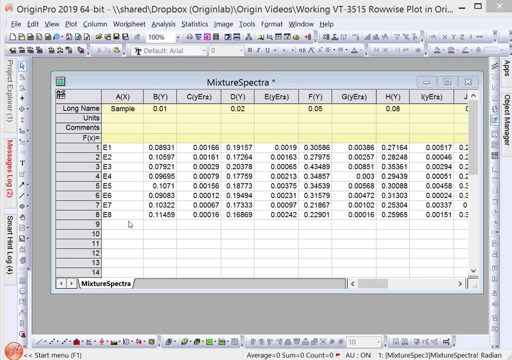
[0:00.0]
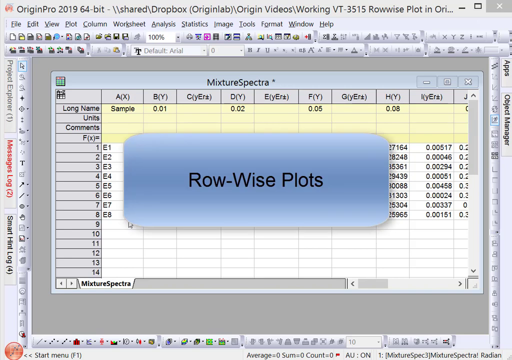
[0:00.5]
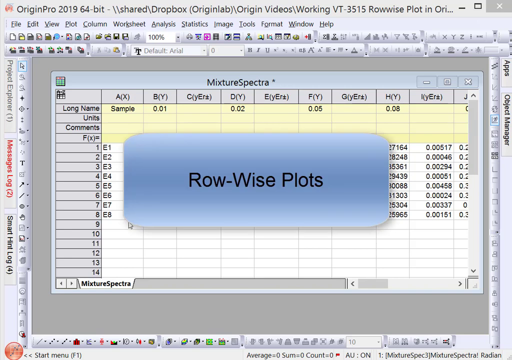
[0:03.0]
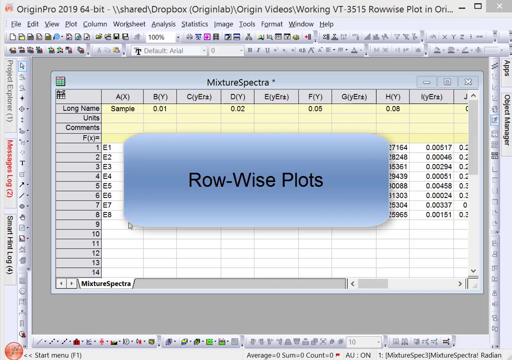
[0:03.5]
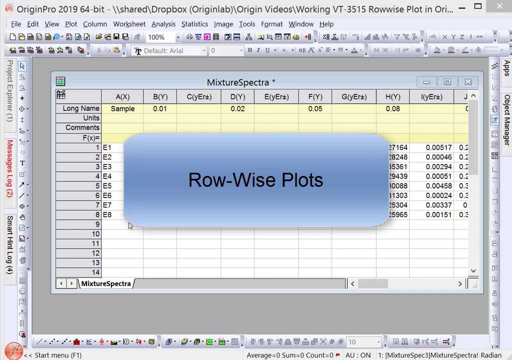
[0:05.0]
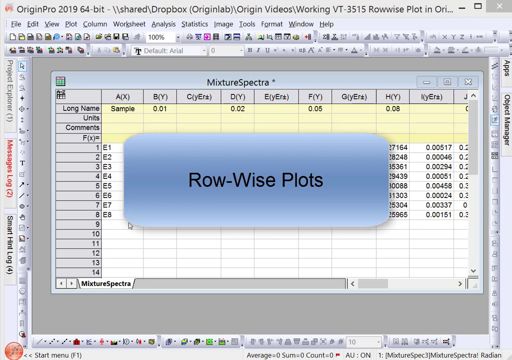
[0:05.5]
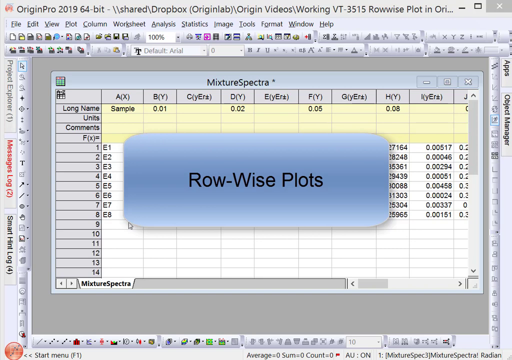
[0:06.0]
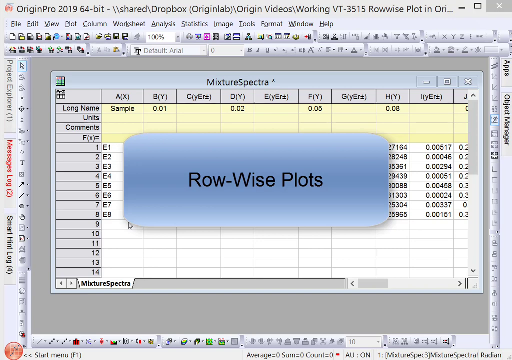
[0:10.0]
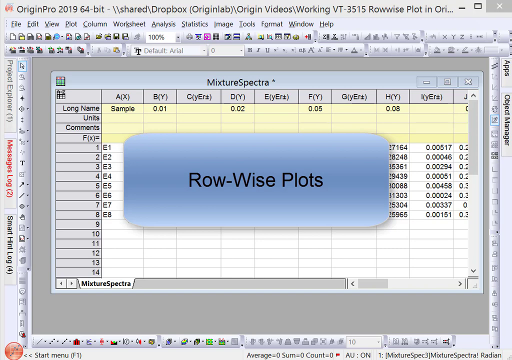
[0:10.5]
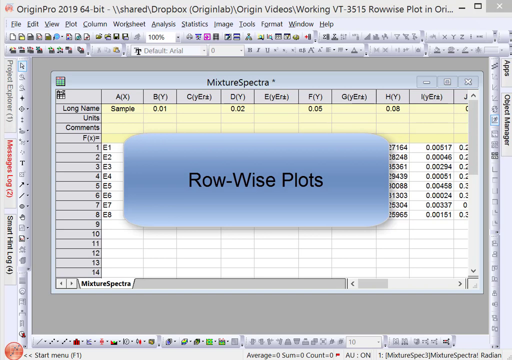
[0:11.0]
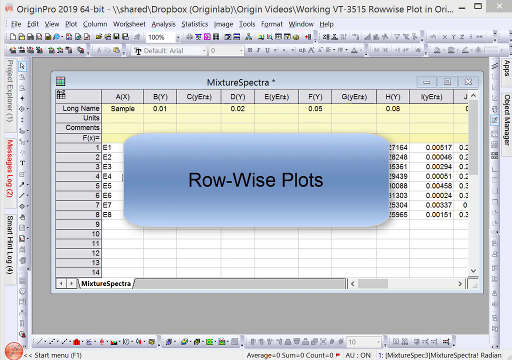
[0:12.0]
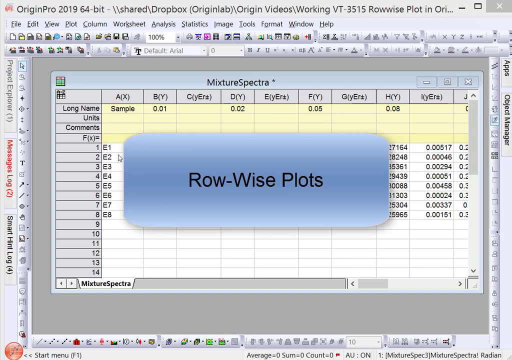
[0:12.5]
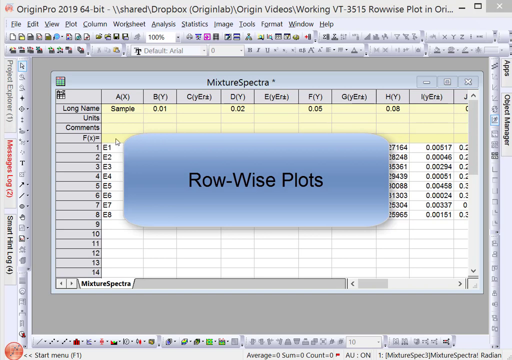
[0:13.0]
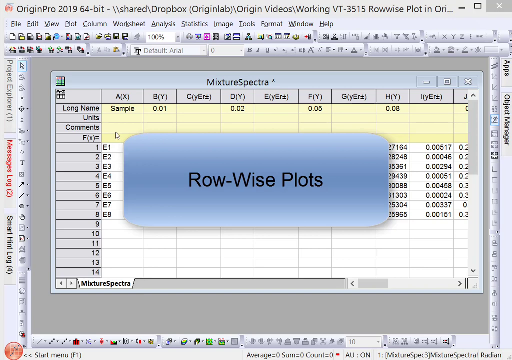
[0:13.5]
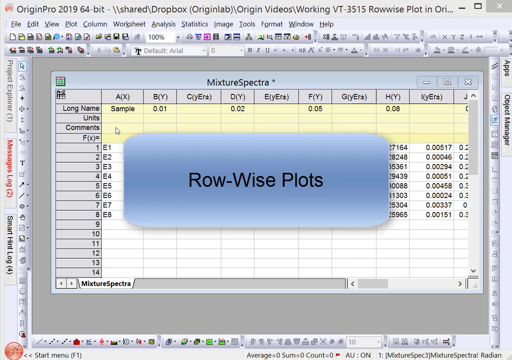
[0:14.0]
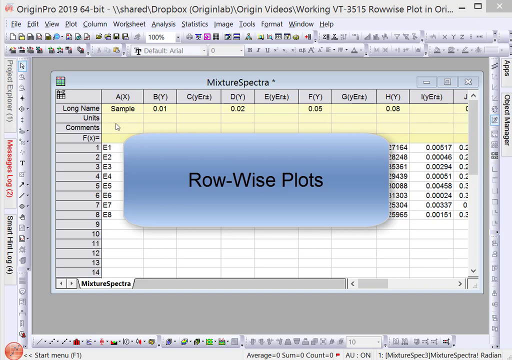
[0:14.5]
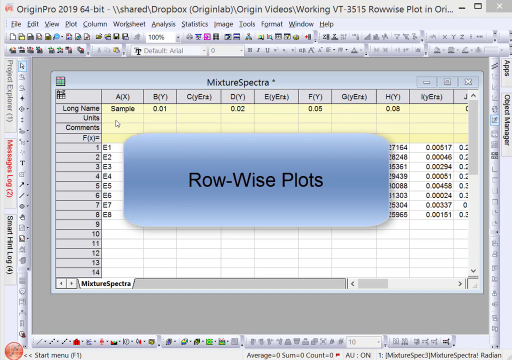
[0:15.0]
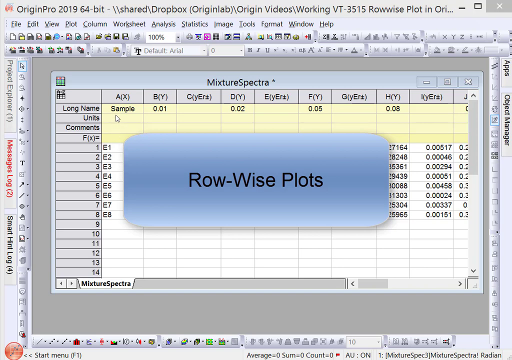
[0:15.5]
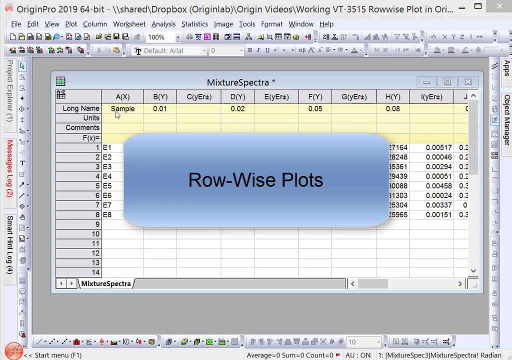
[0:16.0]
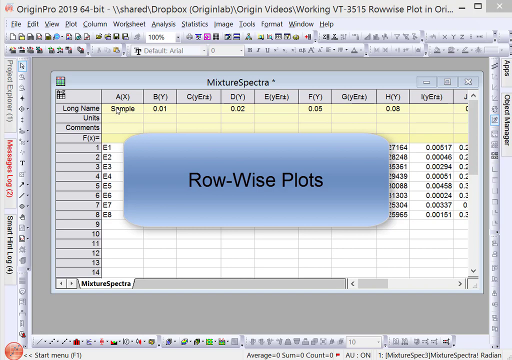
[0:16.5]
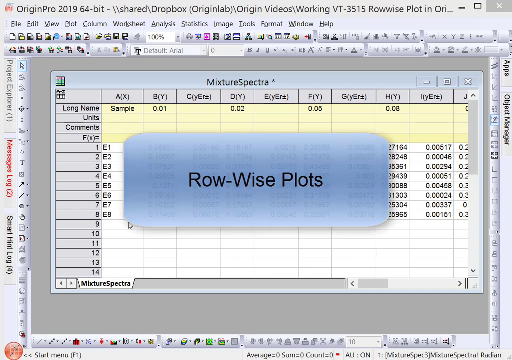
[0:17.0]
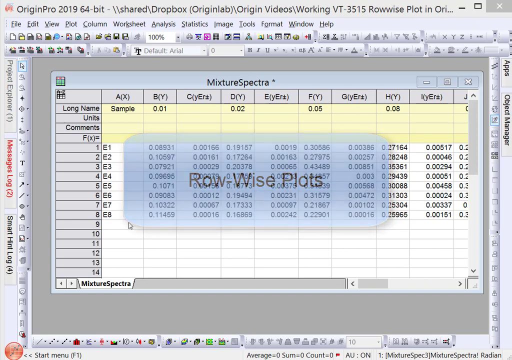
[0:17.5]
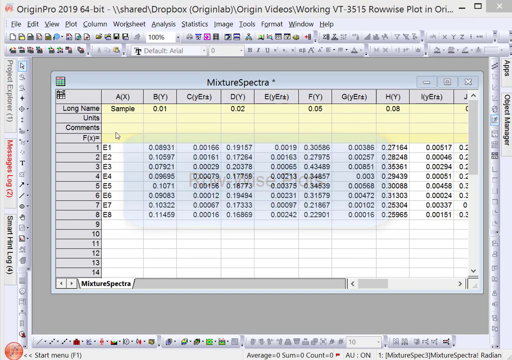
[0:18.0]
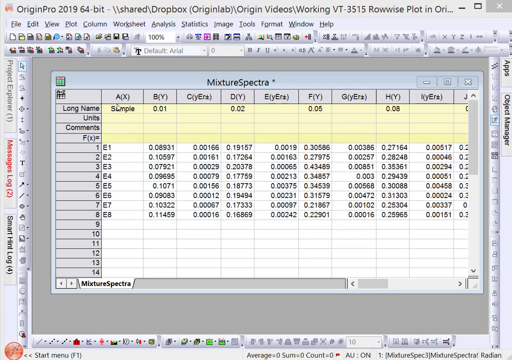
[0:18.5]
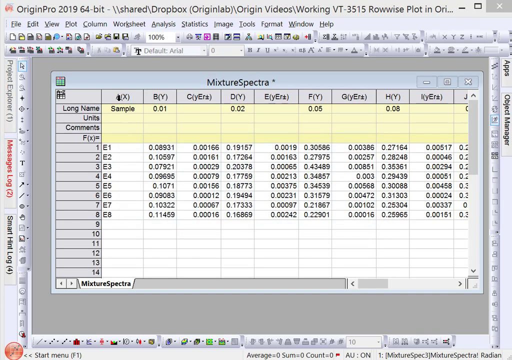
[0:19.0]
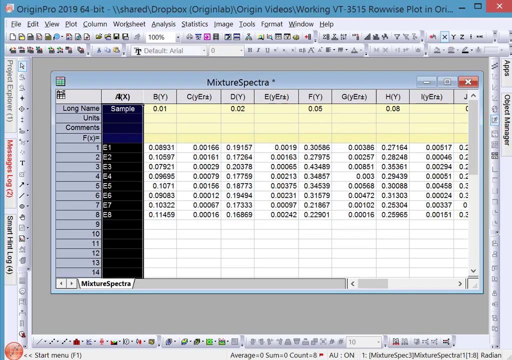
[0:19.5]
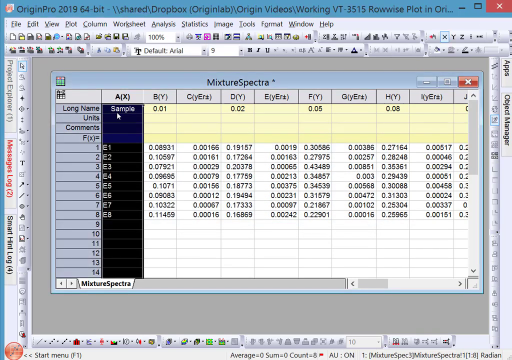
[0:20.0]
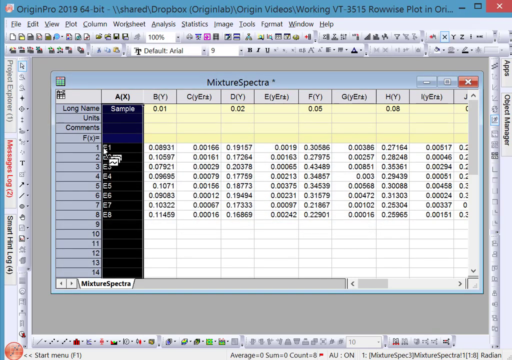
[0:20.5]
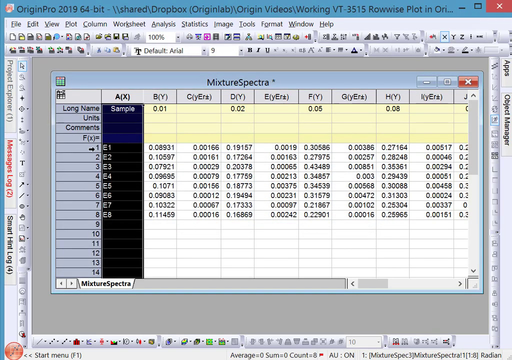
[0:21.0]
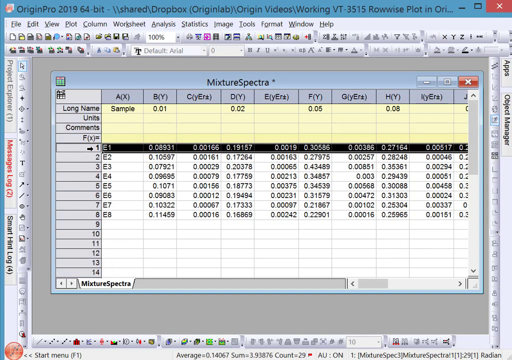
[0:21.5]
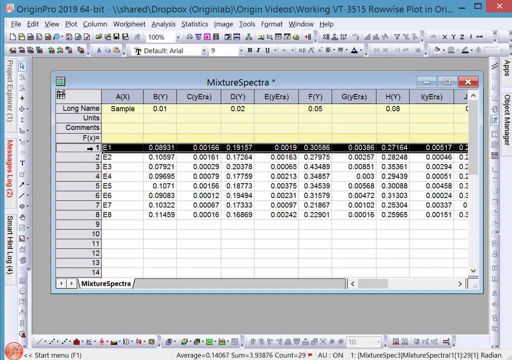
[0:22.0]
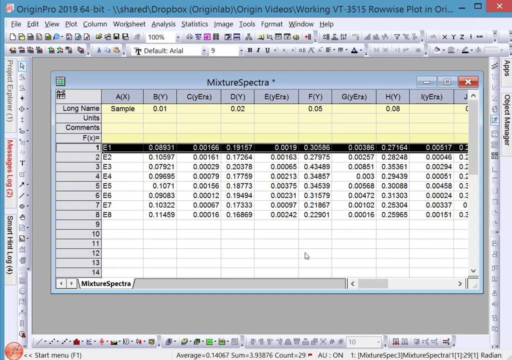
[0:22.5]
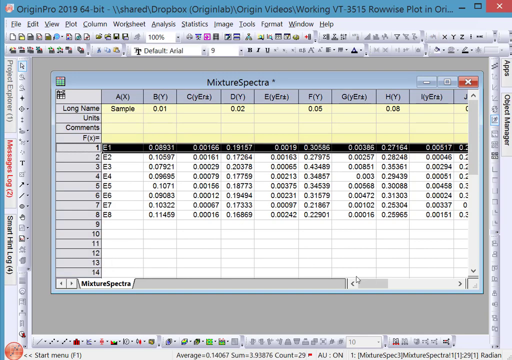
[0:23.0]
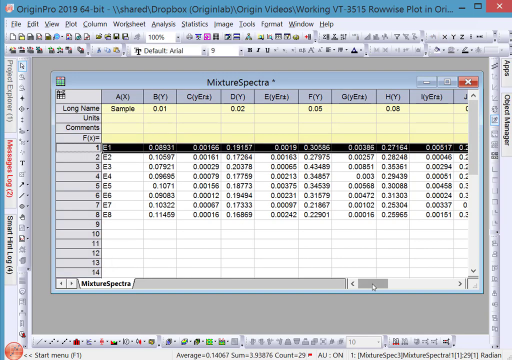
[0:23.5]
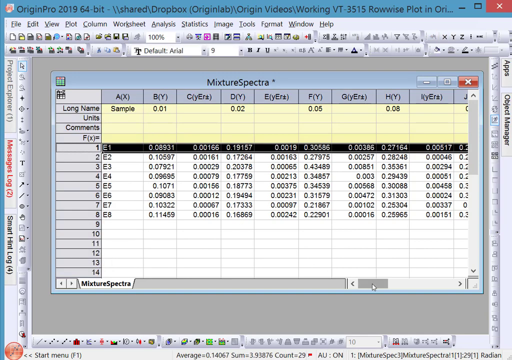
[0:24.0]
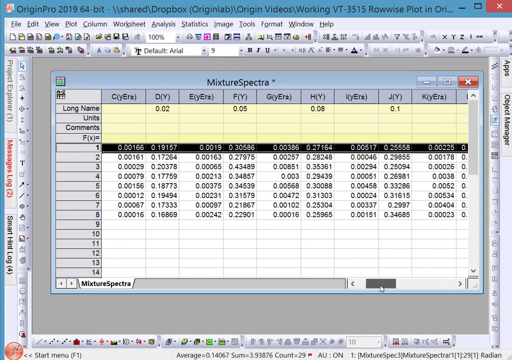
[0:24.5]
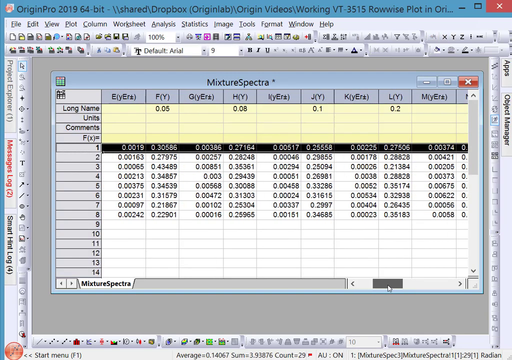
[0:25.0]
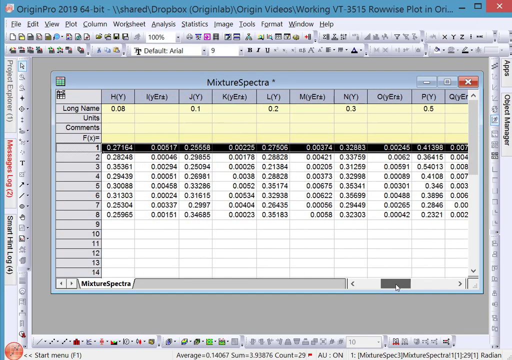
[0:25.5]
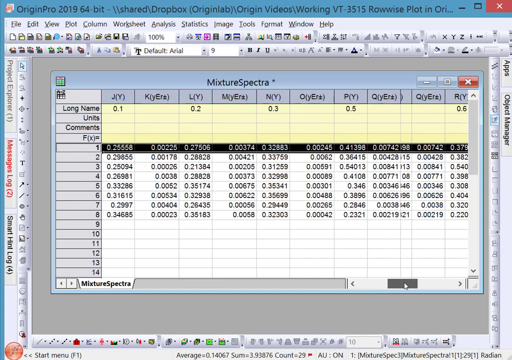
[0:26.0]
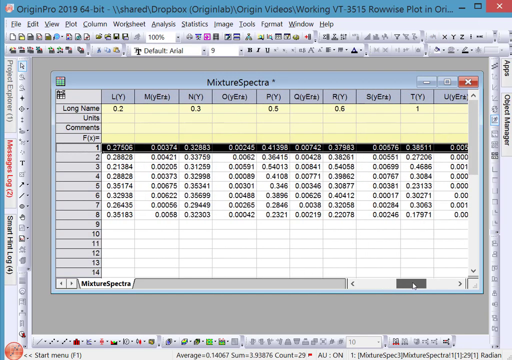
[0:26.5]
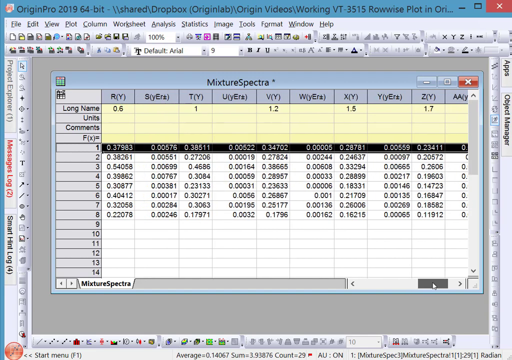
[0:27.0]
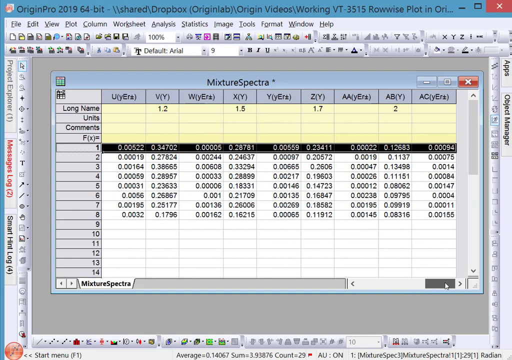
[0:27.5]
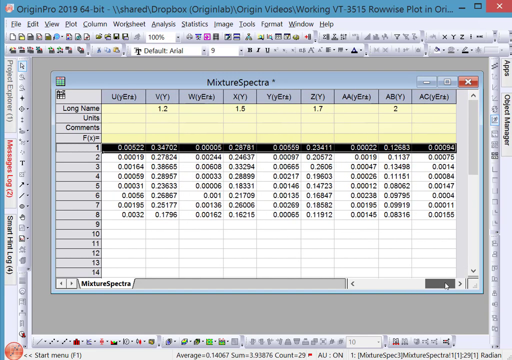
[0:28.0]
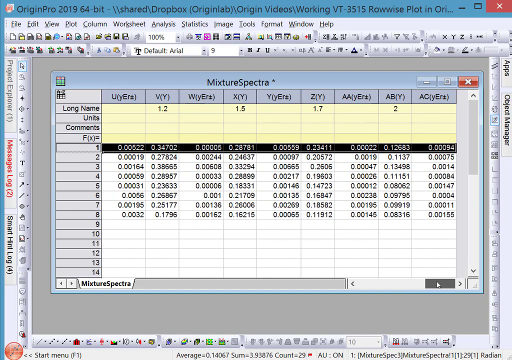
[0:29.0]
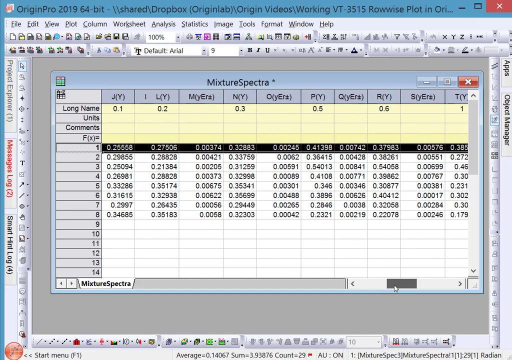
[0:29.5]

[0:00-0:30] An Origin Pro 2019 window opens with a spreadsheet titled 'Mixture Spectra' at the top. Nine columns and eighteen rows are visible; the first four rows are yellow and the rest are white. A title reading 'row-wise plots' comes up in a blue rounded box. The cursor moves slowly upwards on the left side of the box and selects the first column, titled 'A(X)', highlighting it in black. The cursor then moves slightly to the left and selects the fifth row down, which is numbered 1; it is highlighted black with its numbers now white. Next the cursor moves to the bottom right of the screen, grabs a scroll bar and moves it to the right to show the rest of the spreadsheet, then moves it back to the left, returning to the original view of the spreadsheet.